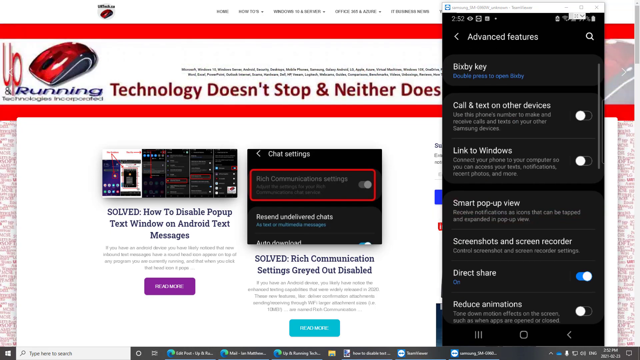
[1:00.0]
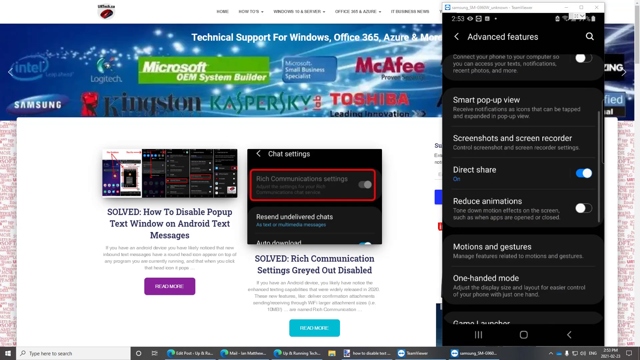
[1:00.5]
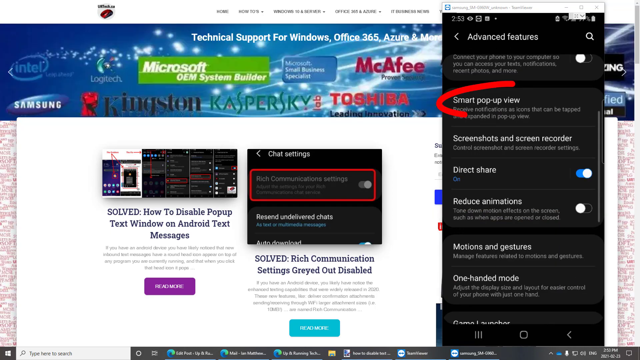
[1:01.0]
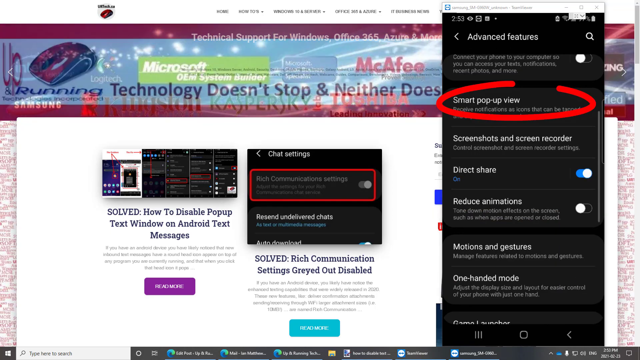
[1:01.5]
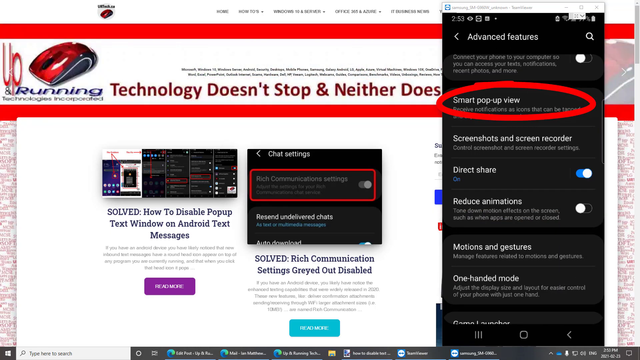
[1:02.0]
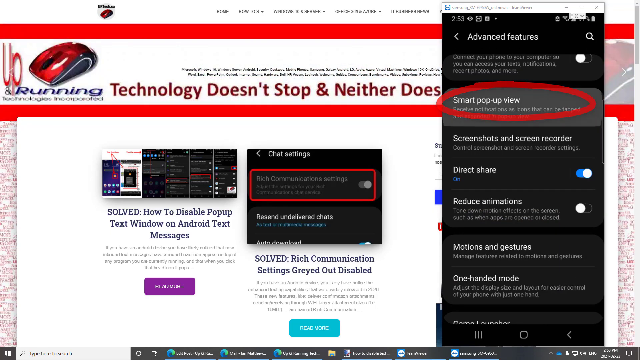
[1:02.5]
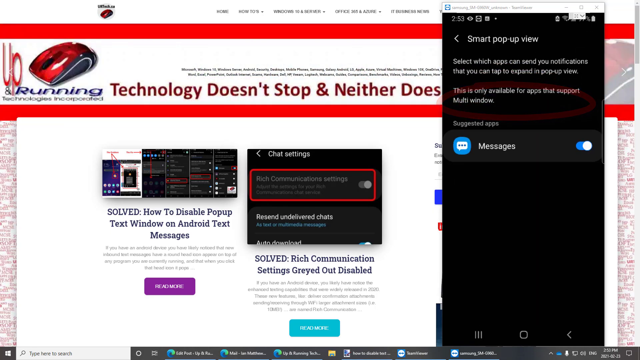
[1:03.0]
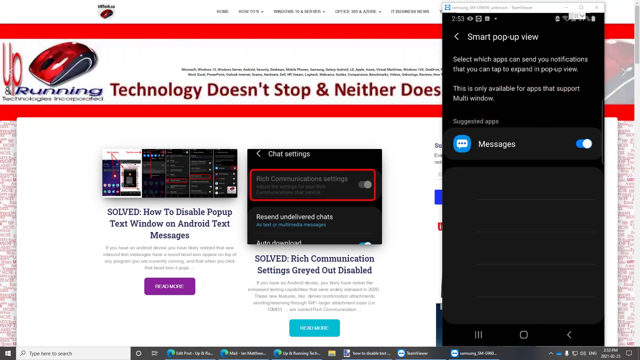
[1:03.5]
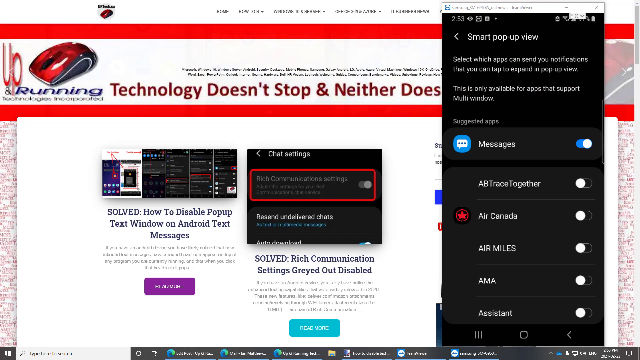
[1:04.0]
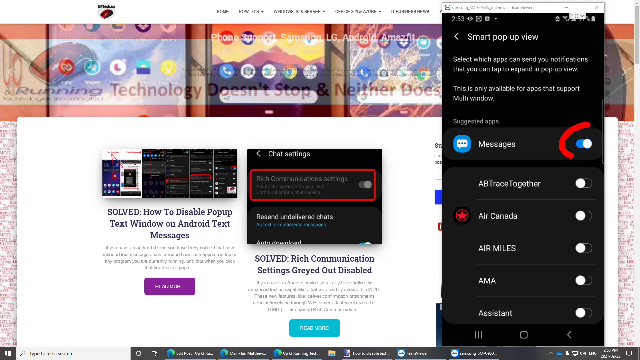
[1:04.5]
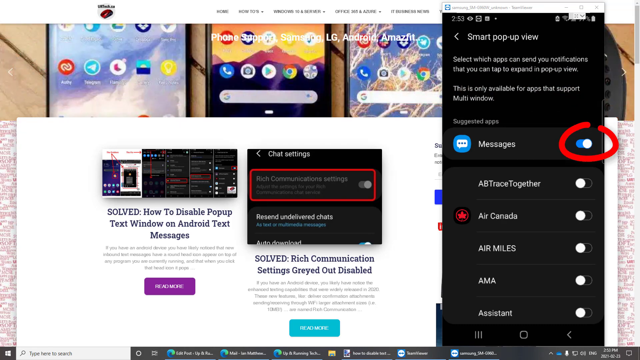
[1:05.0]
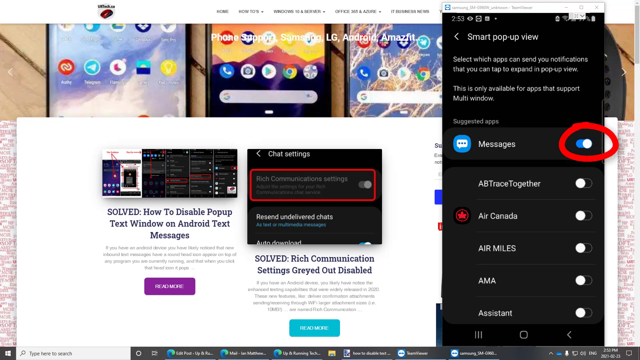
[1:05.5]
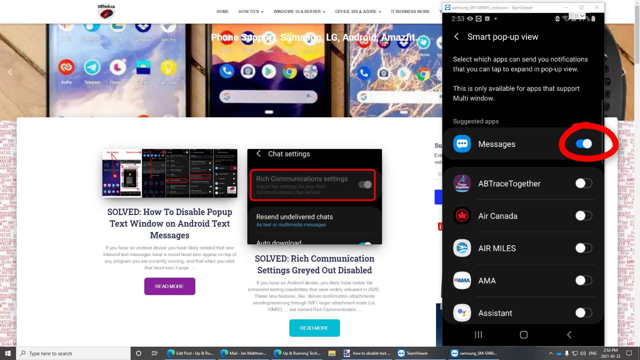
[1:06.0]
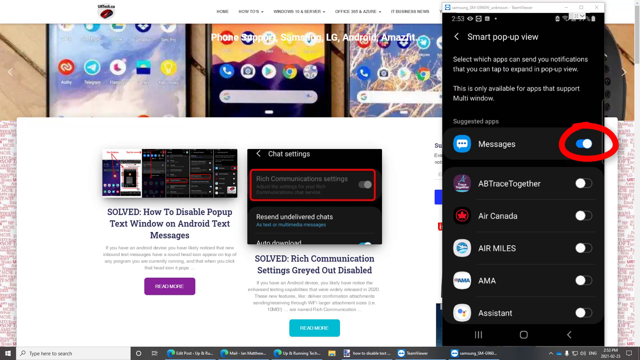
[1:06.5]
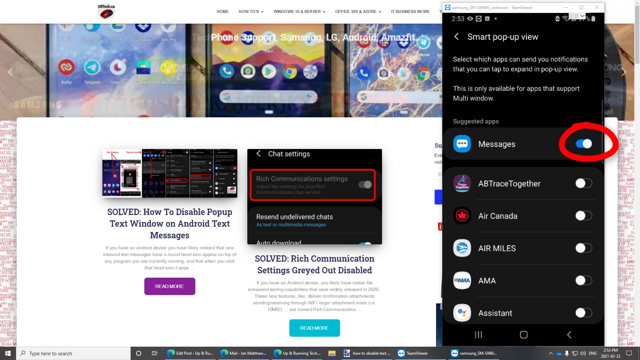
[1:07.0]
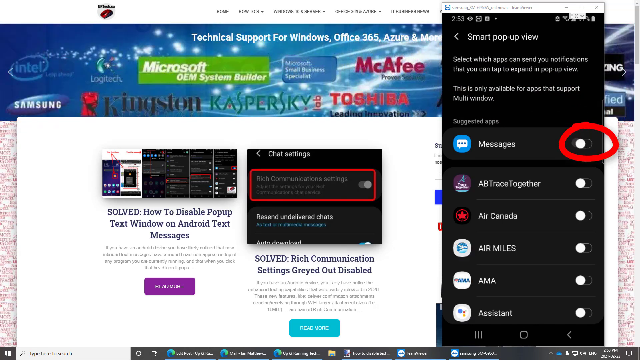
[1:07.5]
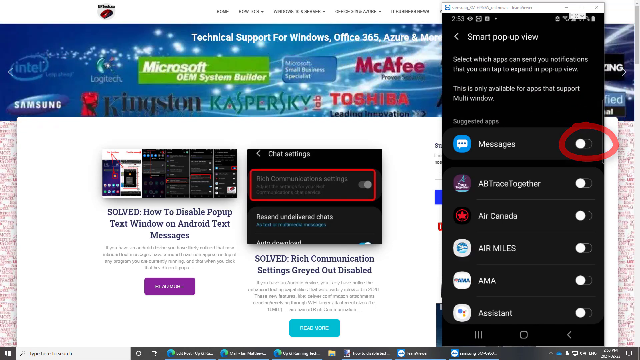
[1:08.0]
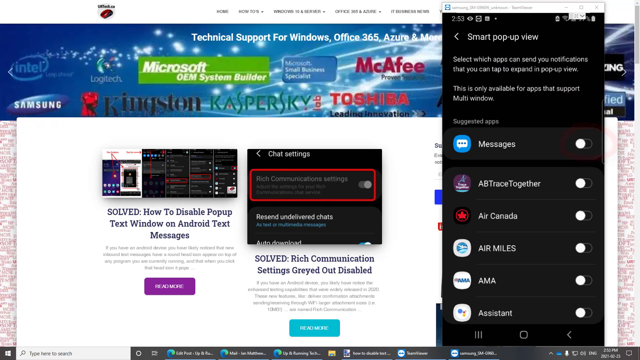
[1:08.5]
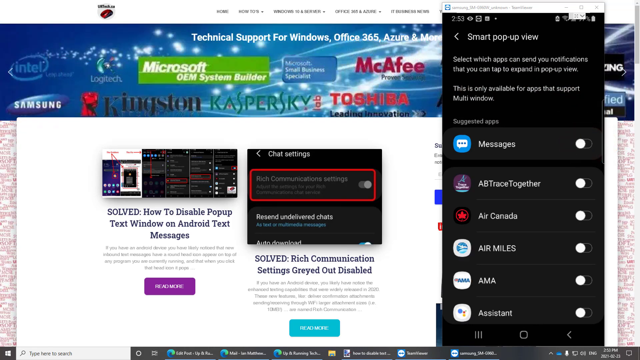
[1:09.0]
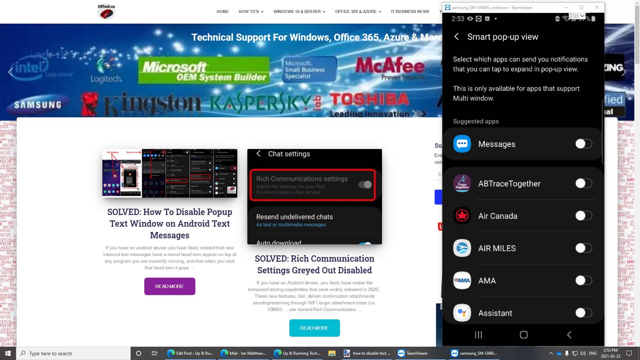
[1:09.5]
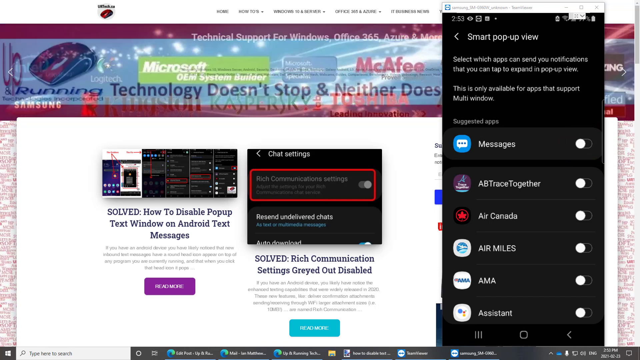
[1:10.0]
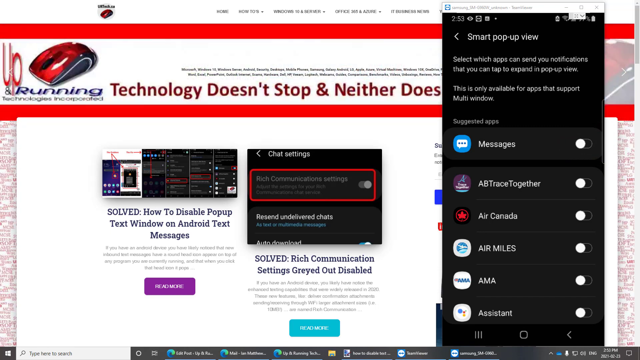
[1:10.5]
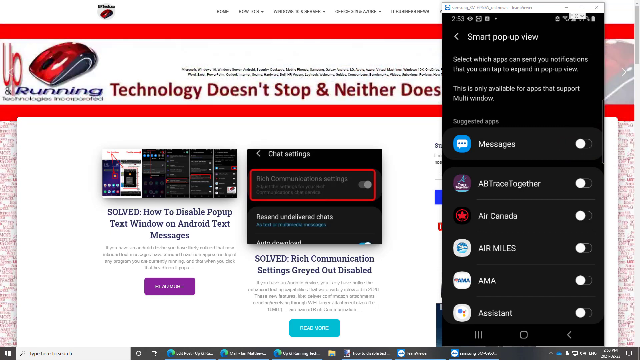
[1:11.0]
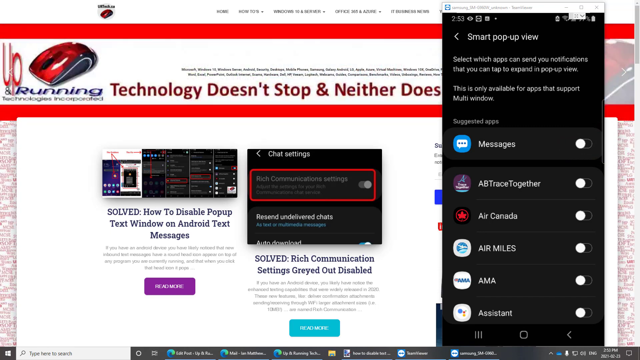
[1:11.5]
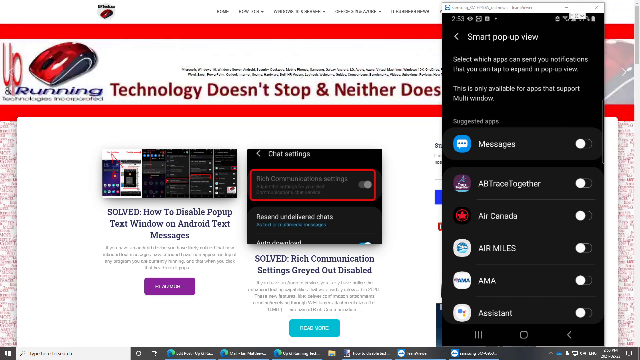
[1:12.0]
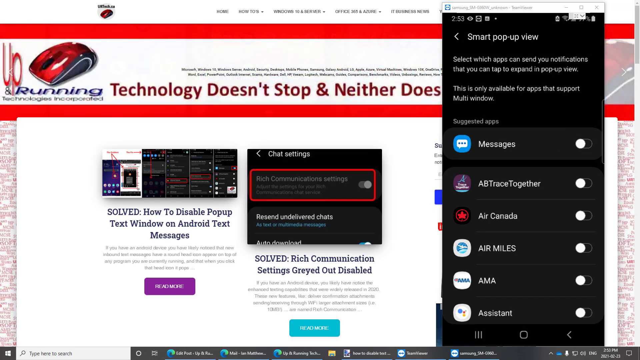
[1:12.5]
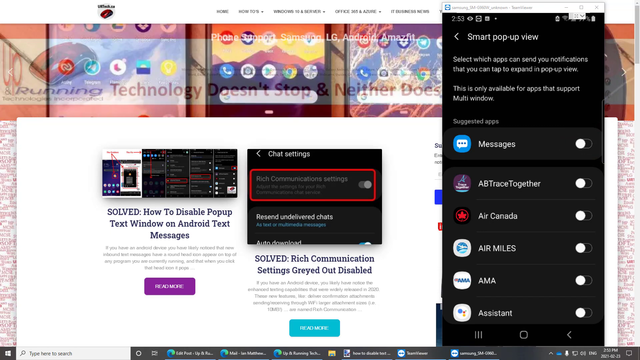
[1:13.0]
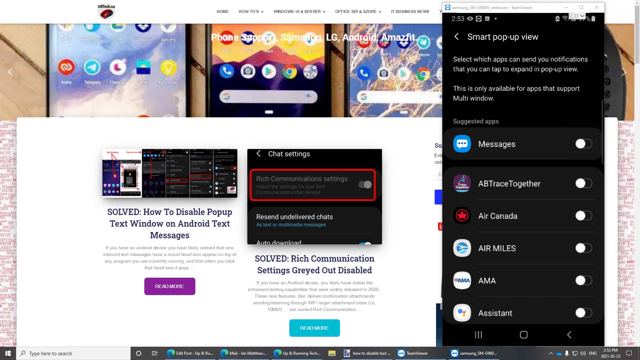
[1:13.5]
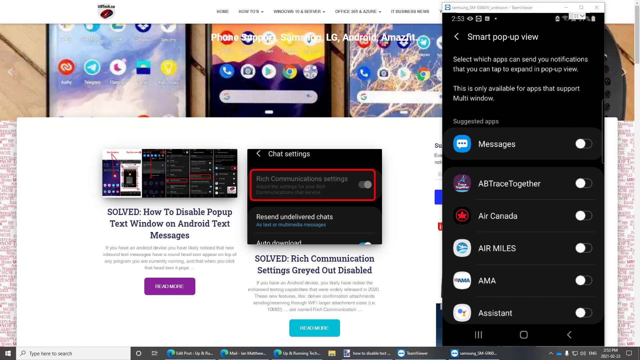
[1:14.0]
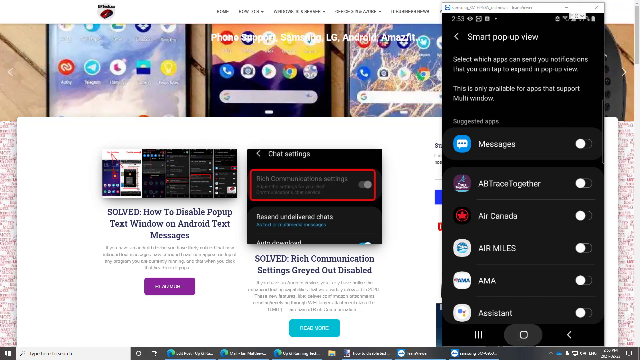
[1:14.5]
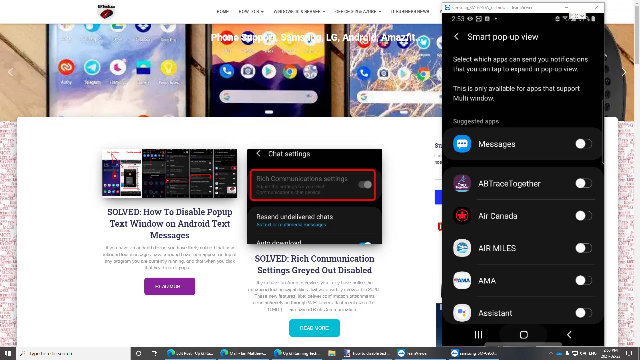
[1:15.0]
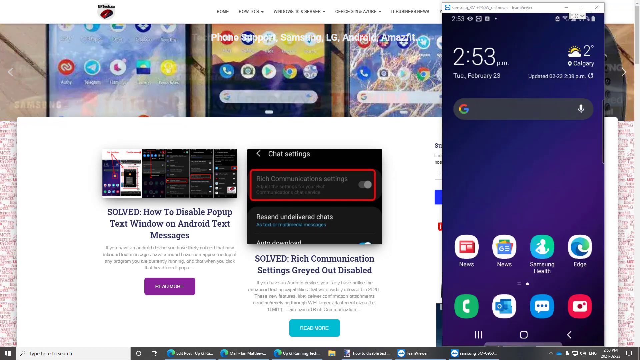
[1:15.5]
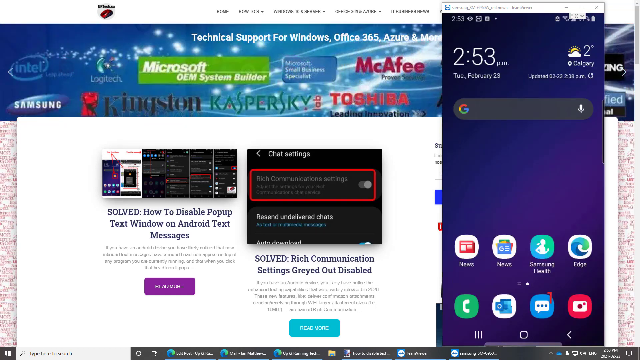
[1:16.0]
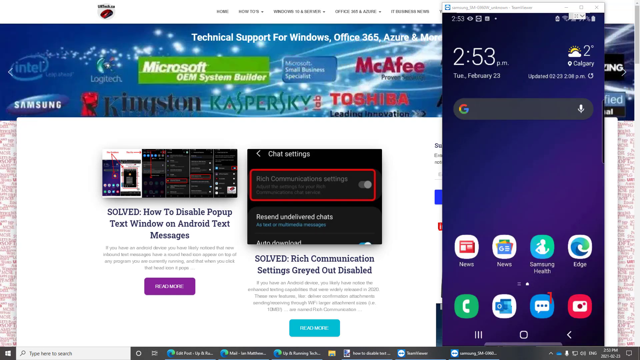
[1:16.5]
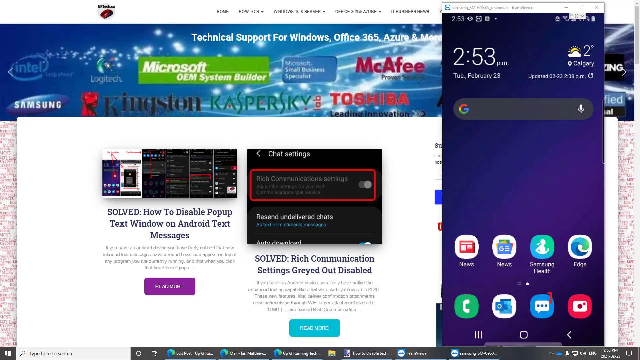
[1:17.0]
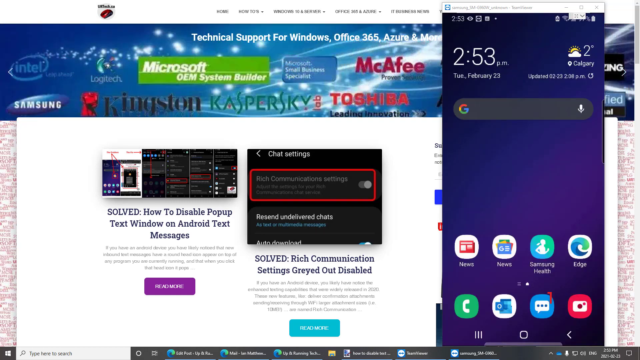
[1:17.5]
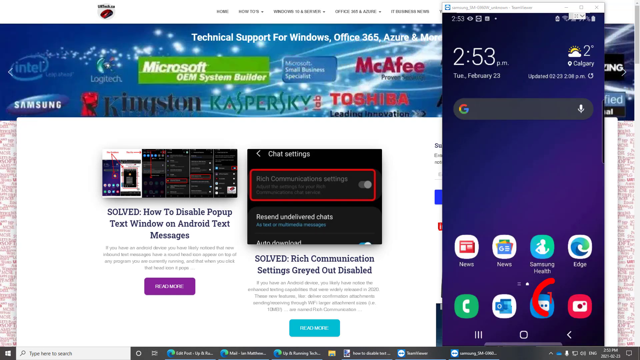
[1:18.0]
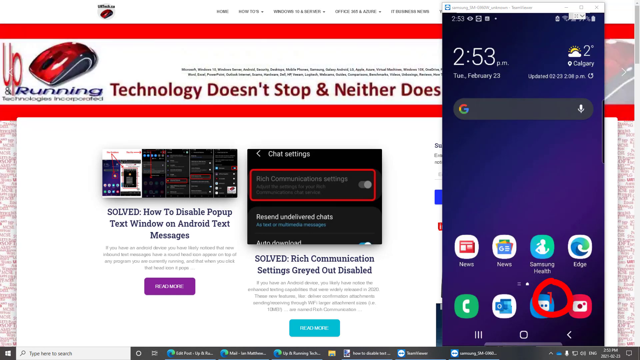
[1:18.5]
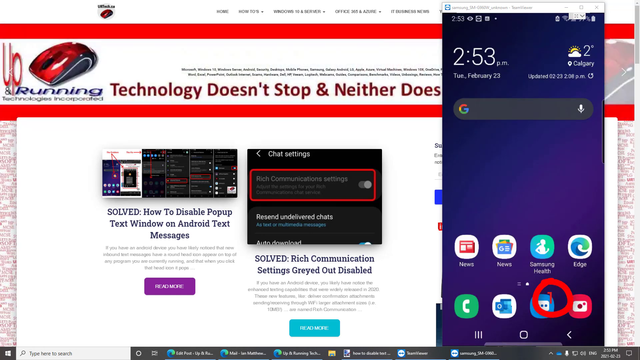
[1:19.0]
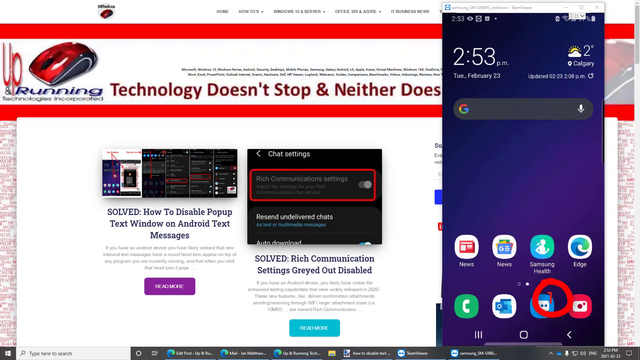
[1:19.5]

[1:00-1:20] The video continues an IT how-to showing how to adjust a setting on an Android smartphone. The background is a Windows 10 desktop with several browser tabs open. The tab taking up most of the background is the website of an IT company called urtech.ca, which has articles on fixing IT problems. The article in the middle of the screen is titled "Solved. Rich communication settings grayed out, disabled," and looks like the one the video is demonstrating. On the right side of the screen is another screen share, of a Samsung Android smartphone. Red lines and arrows pop up on the screen showing how to get to the advanced settings on the phone. The viewer is directed to the message settings and shown to check a box that was previously off. At the top of the screen, the site shows a number of other ads for tech companies such as Samsung, McAfee and Toshiba, which look like a normal website ad banner.